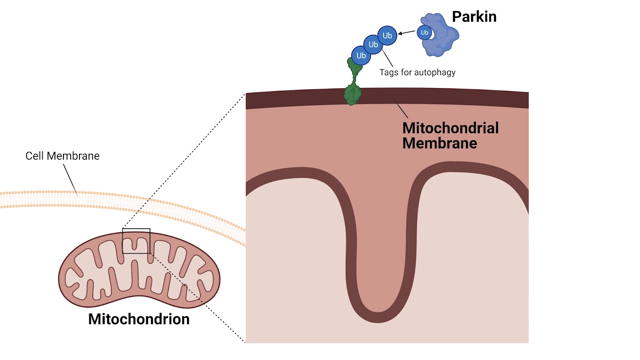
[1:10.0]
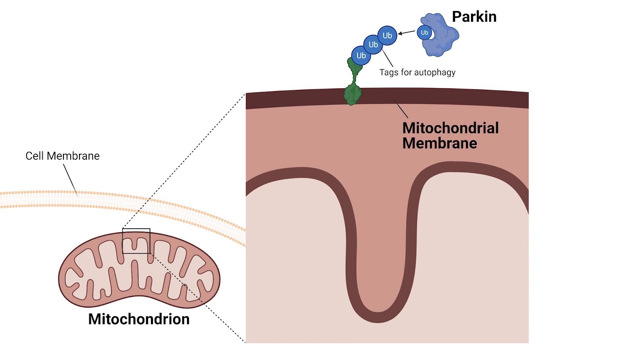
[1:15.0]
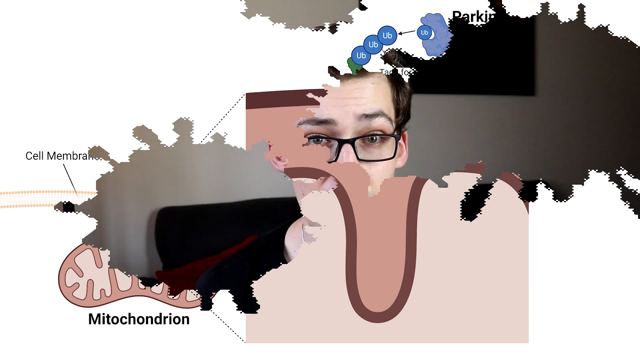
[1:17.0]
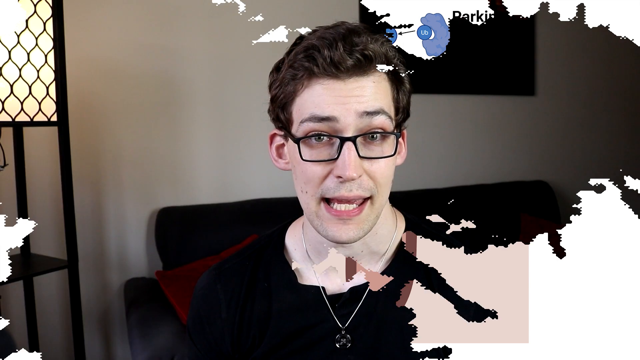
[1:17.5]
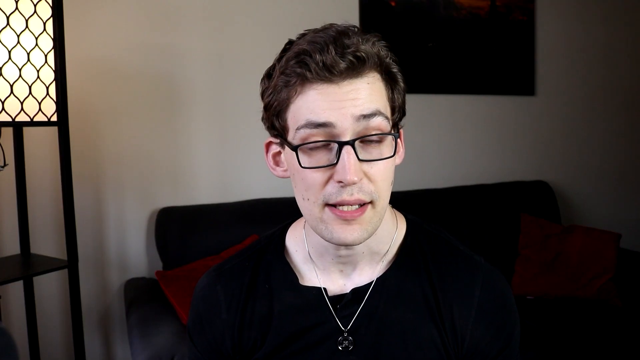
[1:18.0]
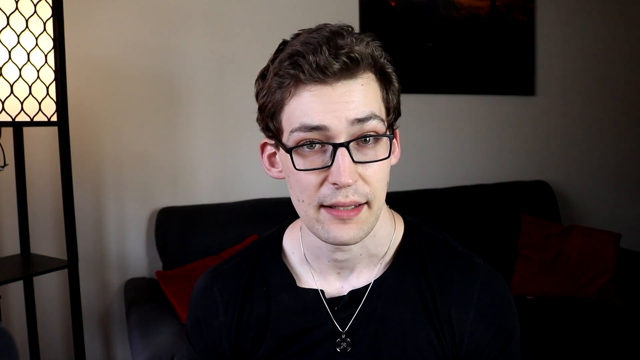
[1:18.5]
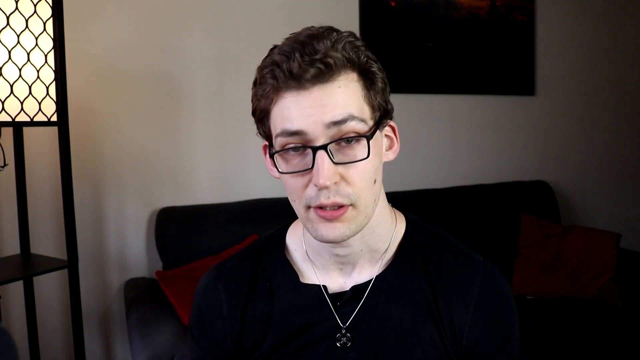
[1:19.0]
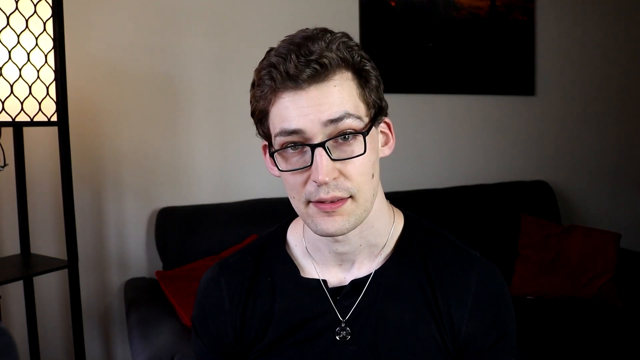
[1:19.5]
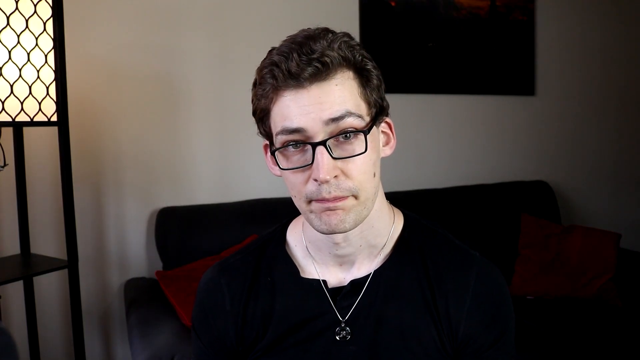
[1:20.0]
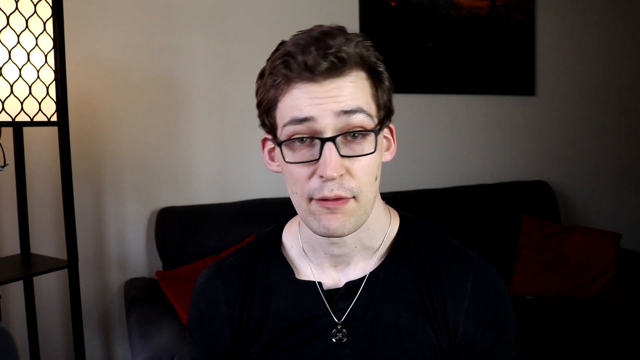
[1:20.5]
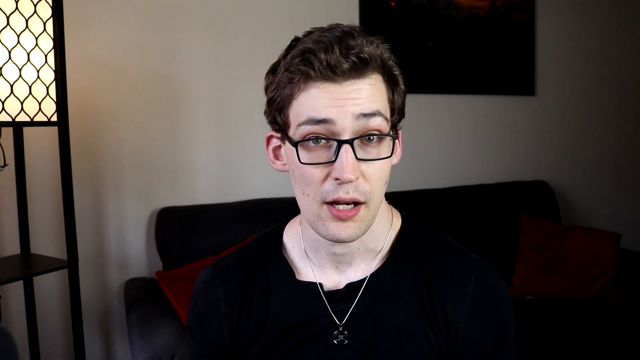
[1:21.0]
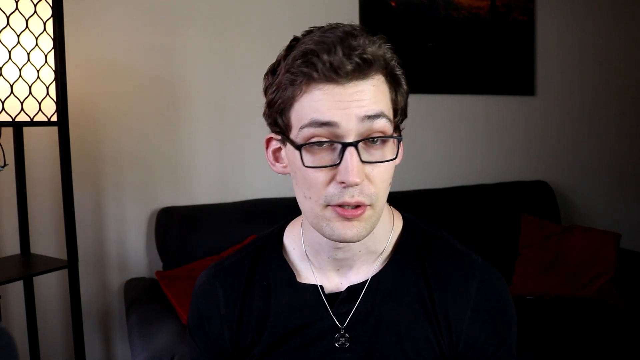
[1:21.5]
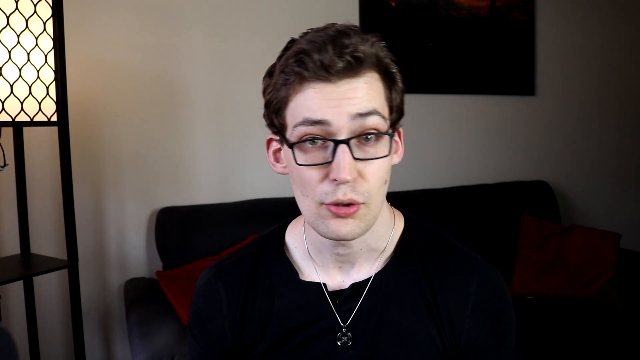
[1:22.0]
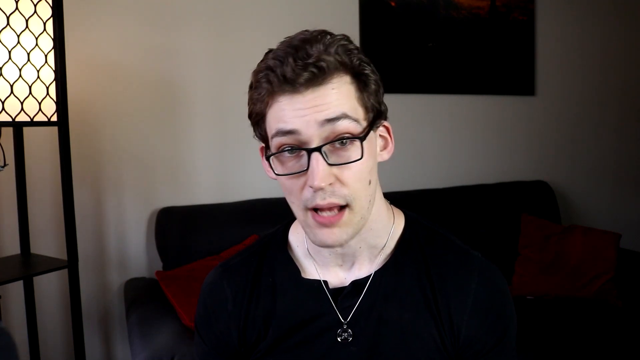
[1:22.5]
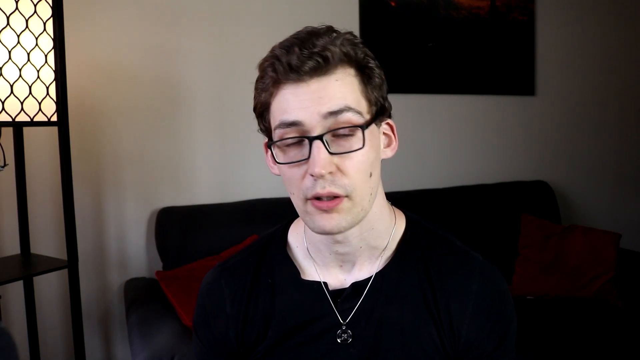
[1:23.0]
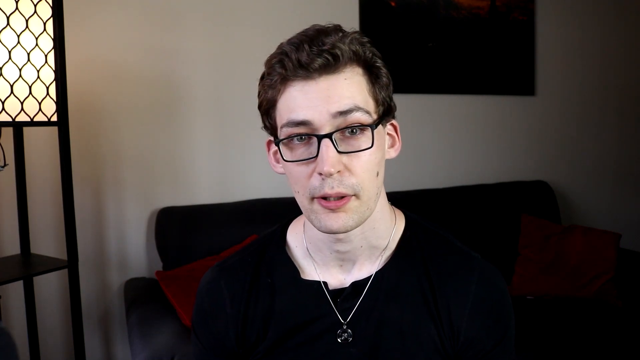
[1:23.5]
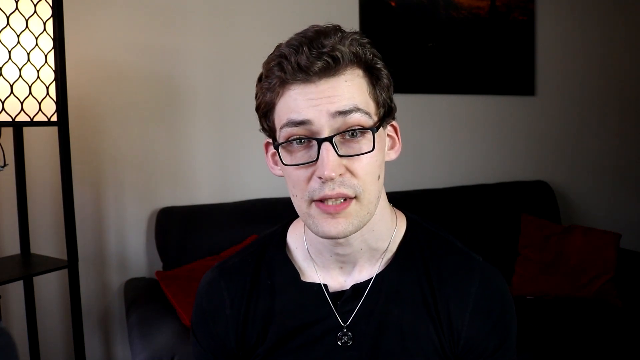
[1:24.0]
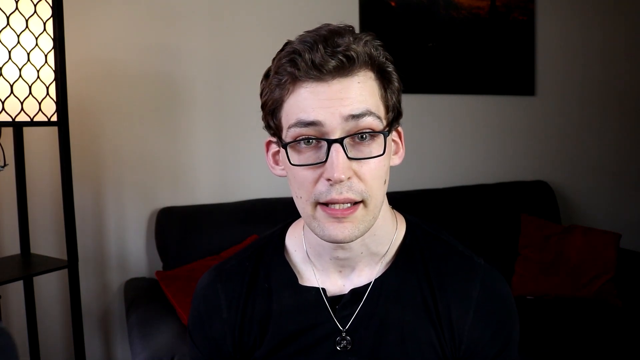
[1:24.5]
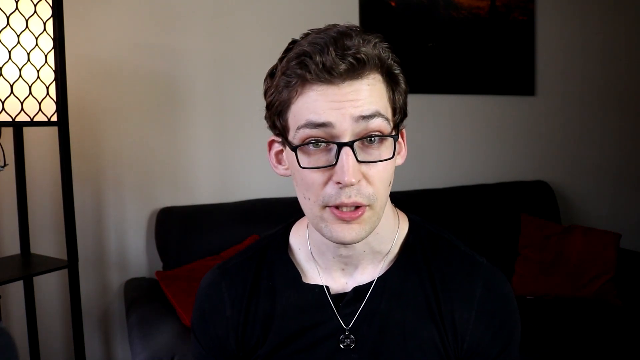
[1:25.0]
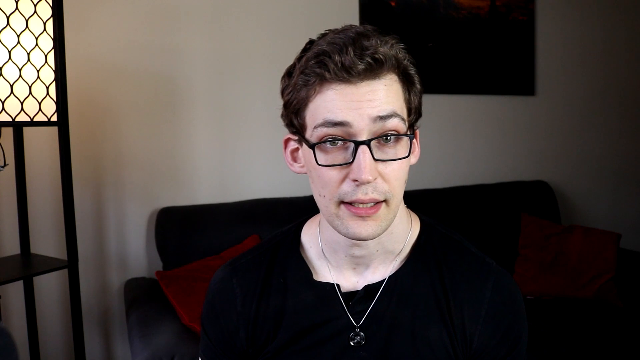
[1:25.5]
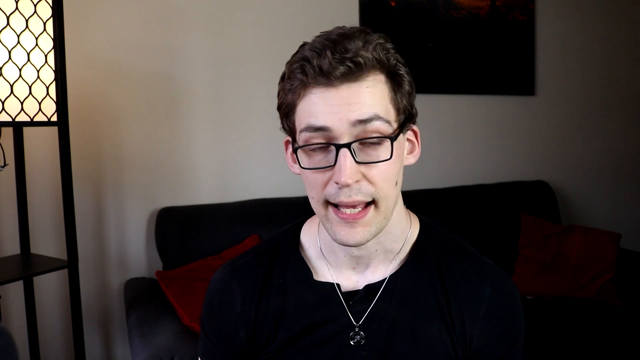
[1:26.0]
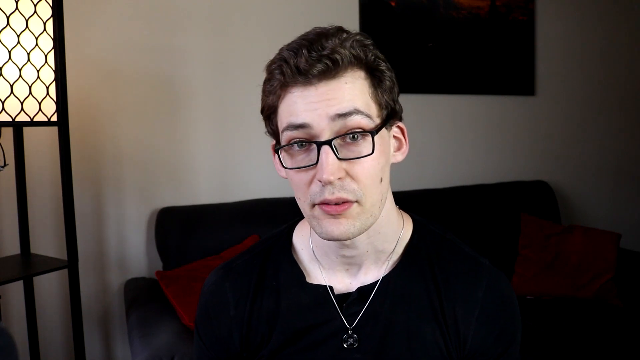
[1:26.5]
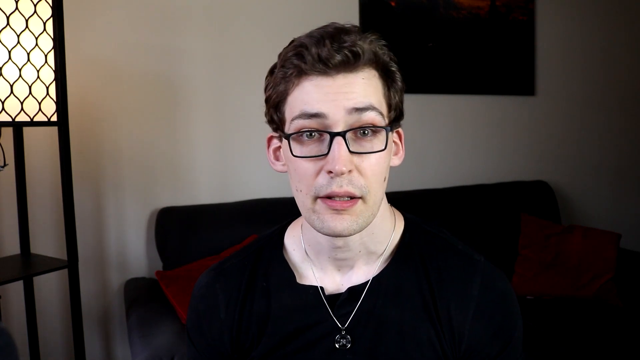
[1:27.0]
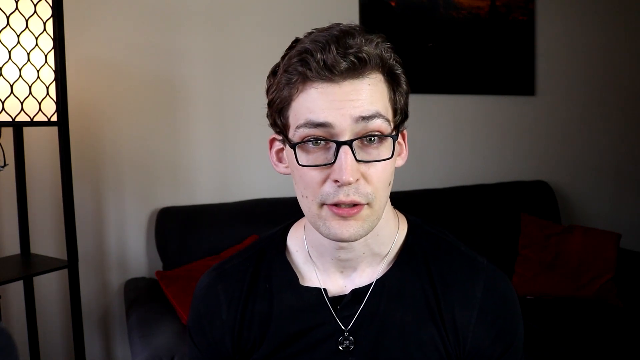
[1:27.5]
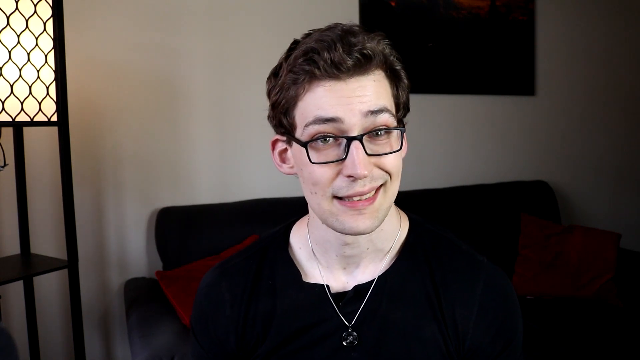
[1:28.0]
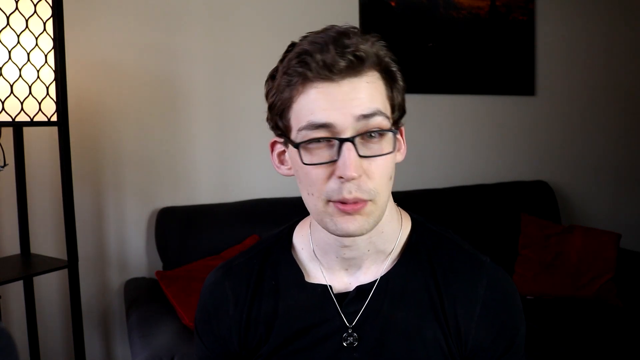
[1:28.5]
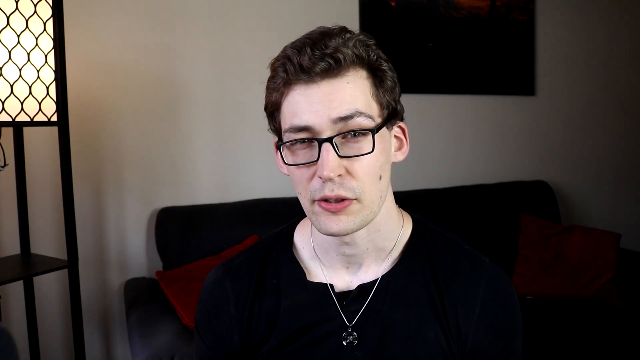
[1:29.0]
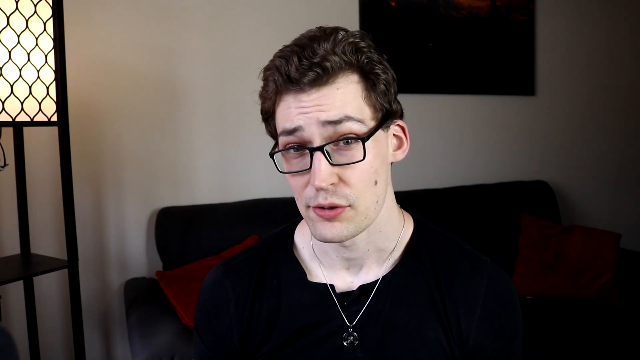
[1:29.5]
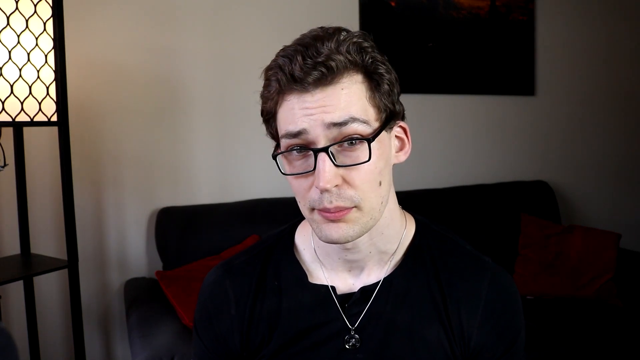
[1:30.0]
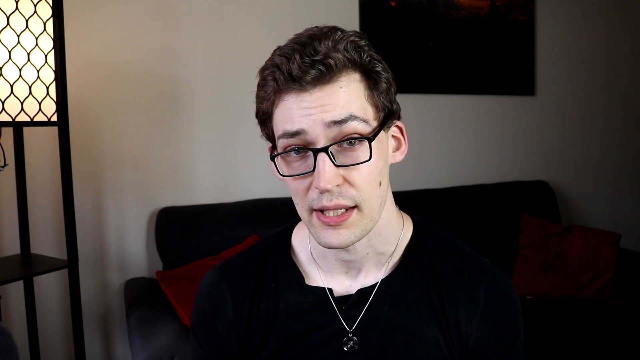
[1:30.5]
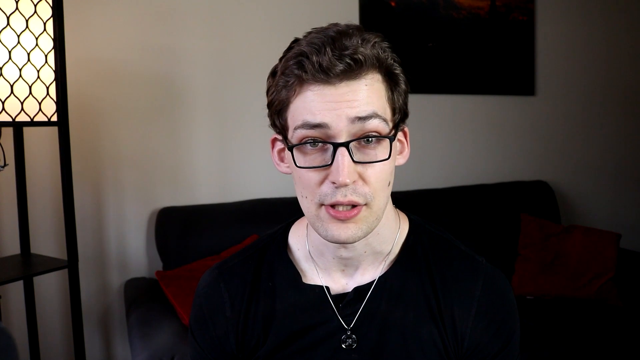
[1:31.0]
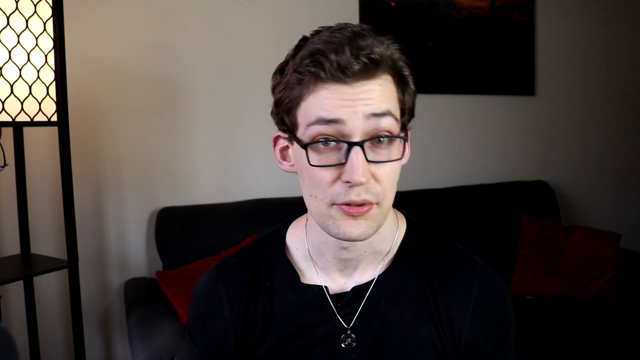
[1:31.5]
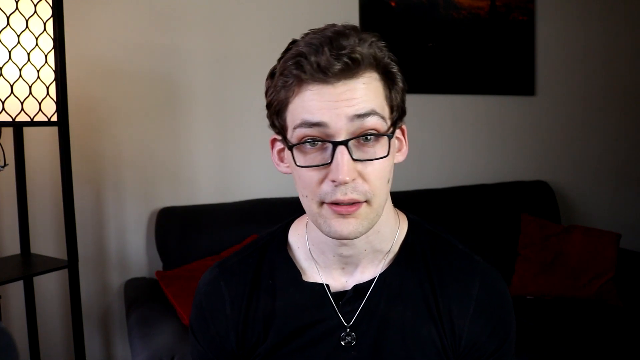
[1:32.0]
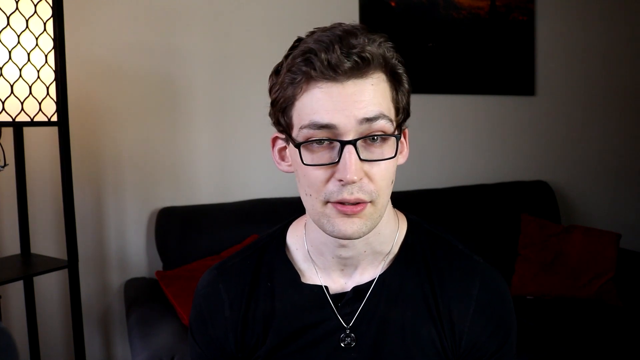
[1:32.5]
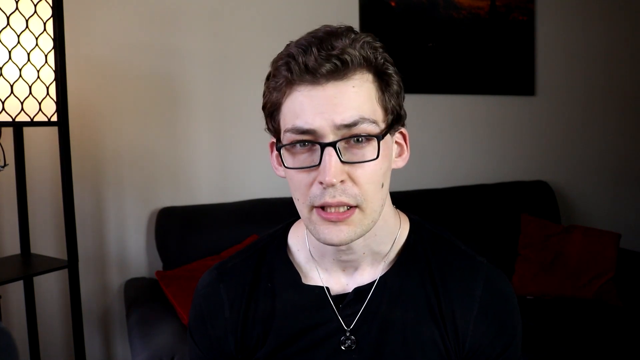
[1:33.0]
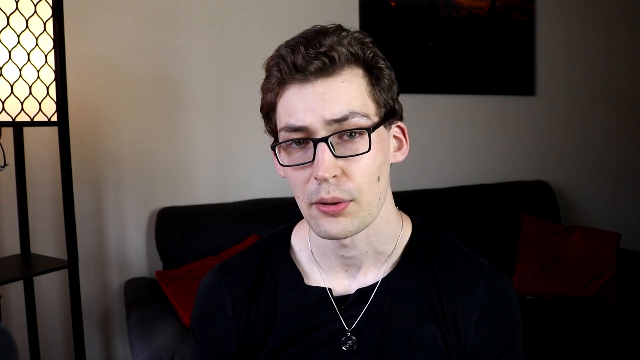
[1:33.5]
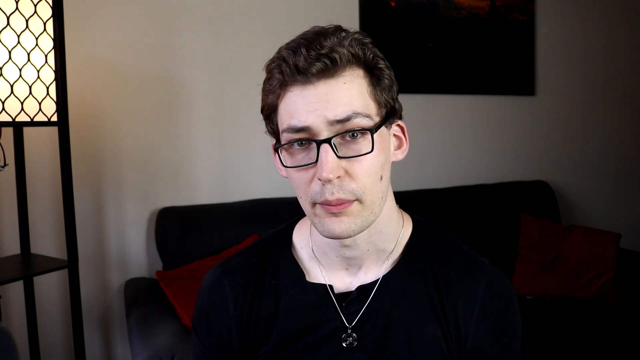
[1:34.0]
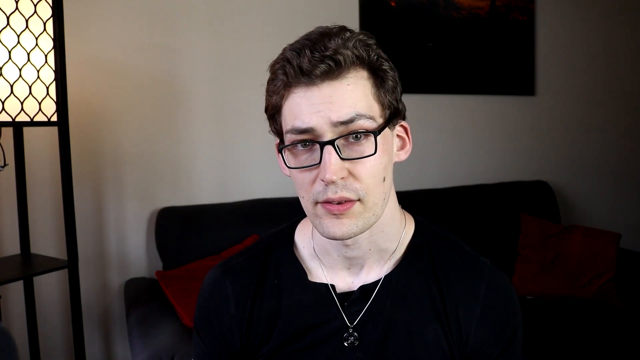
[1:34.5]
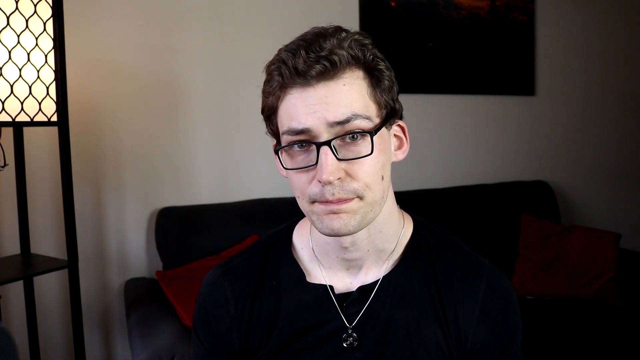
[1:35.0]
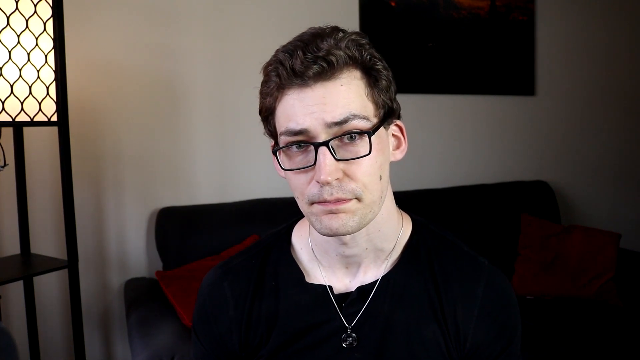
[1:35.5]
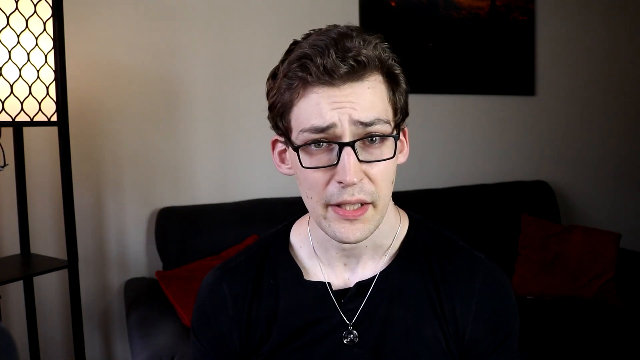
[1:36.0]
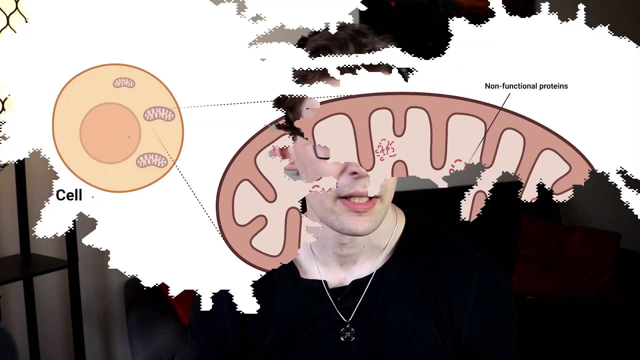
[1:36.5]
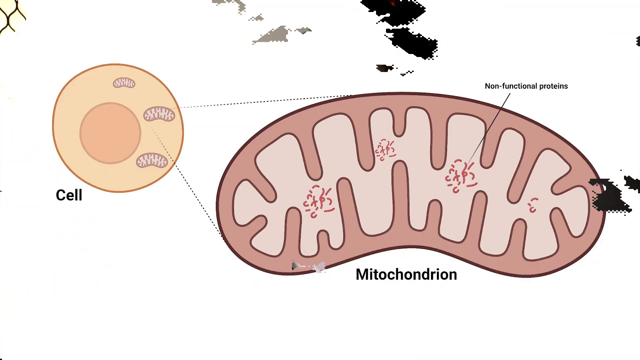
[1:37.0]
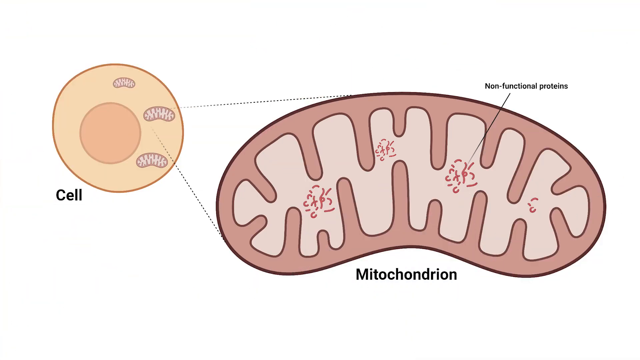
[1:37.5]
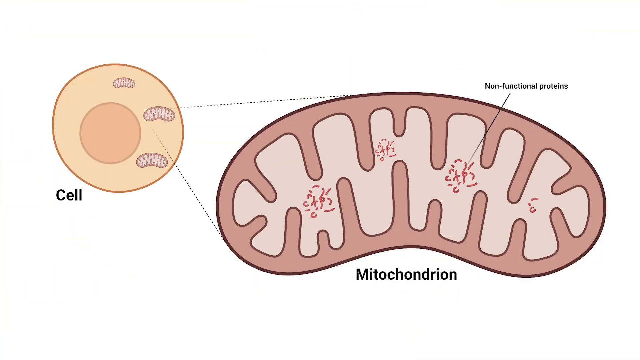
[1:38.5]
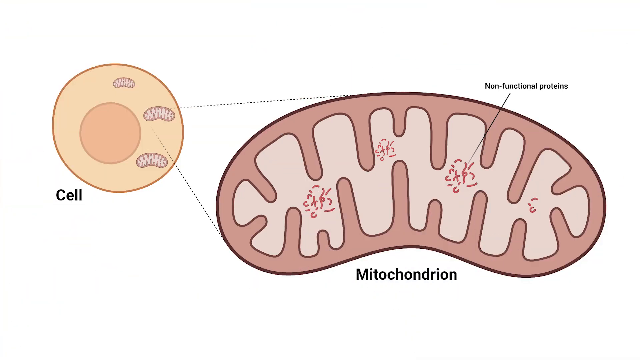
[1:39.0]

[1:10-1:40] The graphic of the Parkin process shows the mitochondrial membrane and the cell membrane, which lies outside the mitochondrial membrane. The presenter then appears again in the same room: the black couch, red pillows, an off-white wall, a black painting with a redder upper segment, and the lamp with a black frame and a yellowish glow. The video then shifts to another image showing the mitochondrion within the cell and showing non-functional proteins.